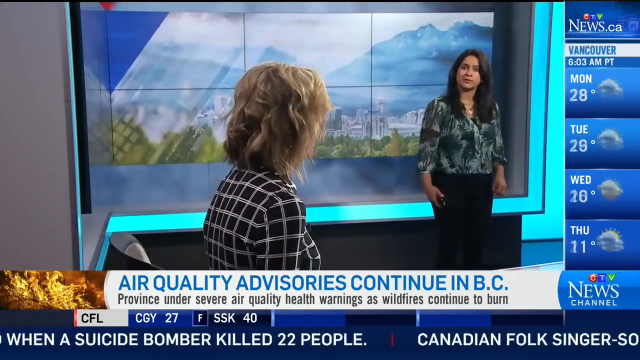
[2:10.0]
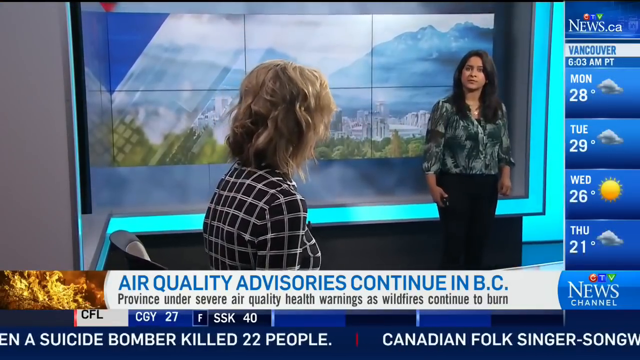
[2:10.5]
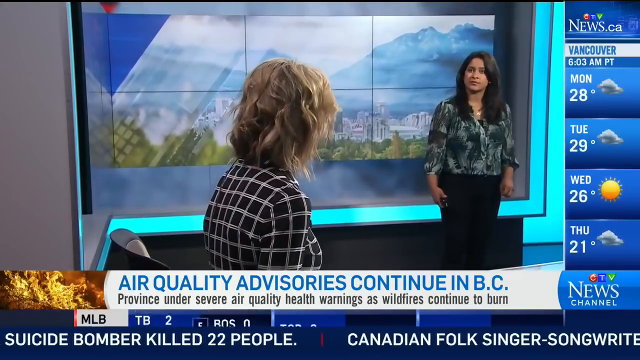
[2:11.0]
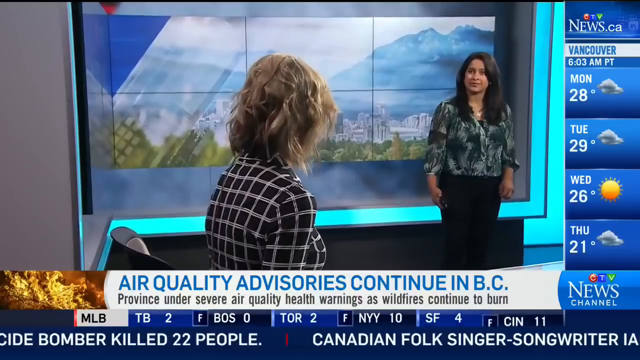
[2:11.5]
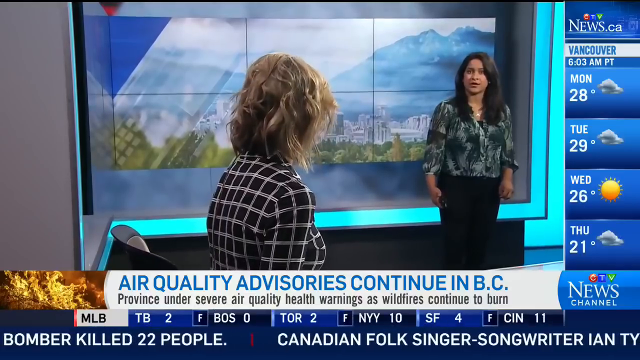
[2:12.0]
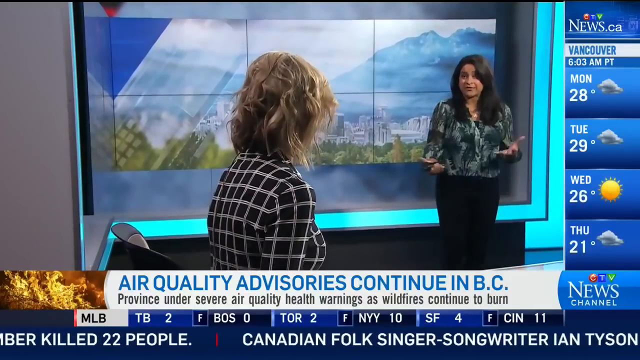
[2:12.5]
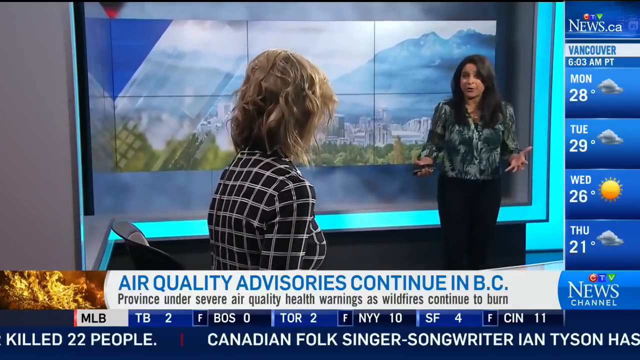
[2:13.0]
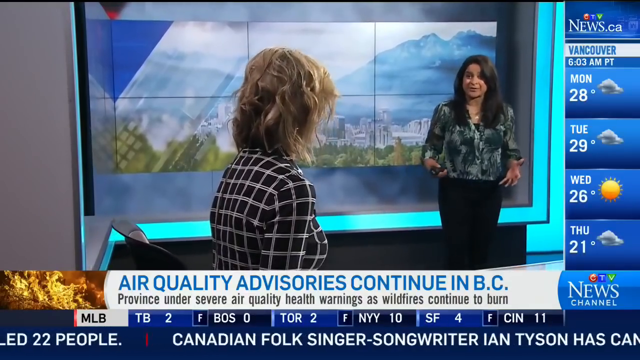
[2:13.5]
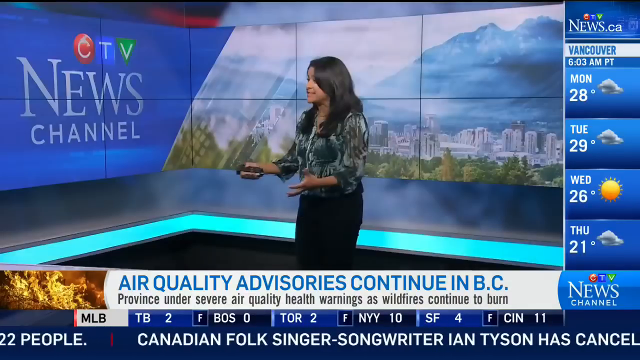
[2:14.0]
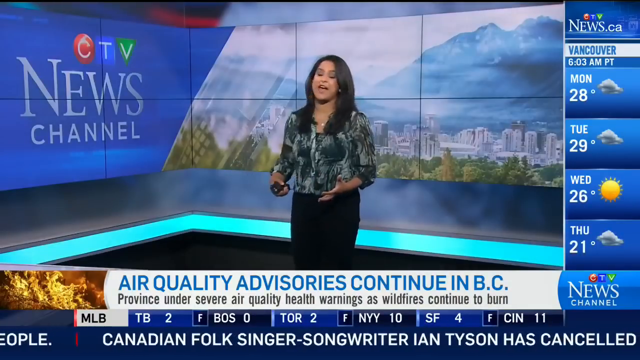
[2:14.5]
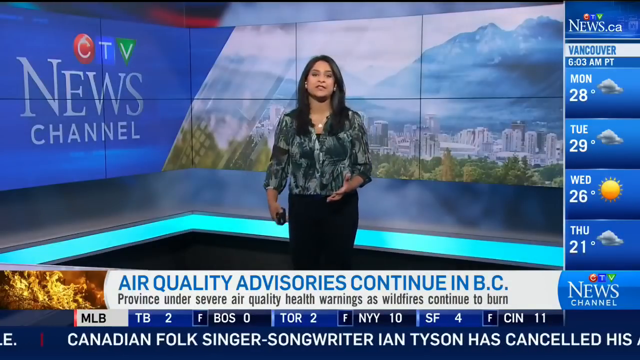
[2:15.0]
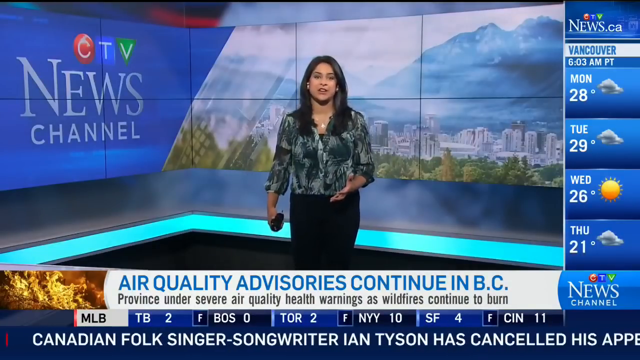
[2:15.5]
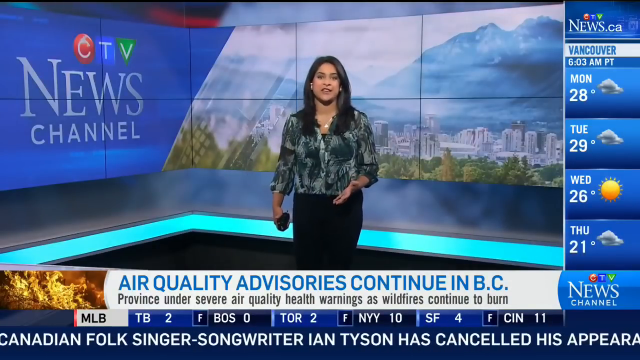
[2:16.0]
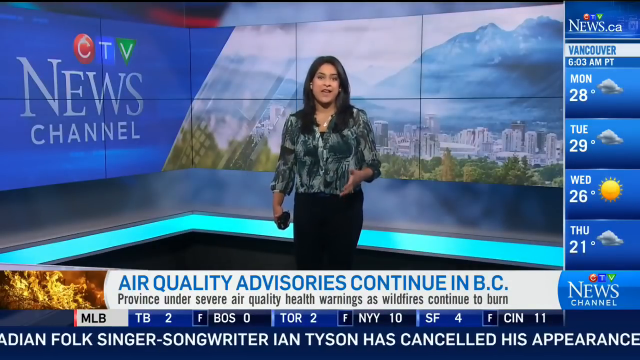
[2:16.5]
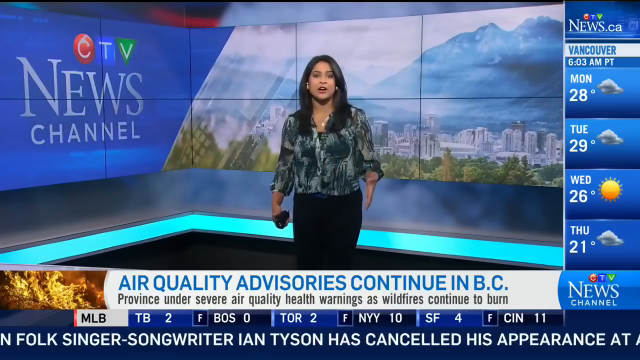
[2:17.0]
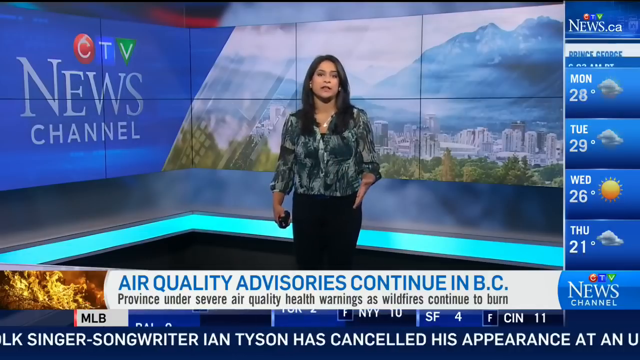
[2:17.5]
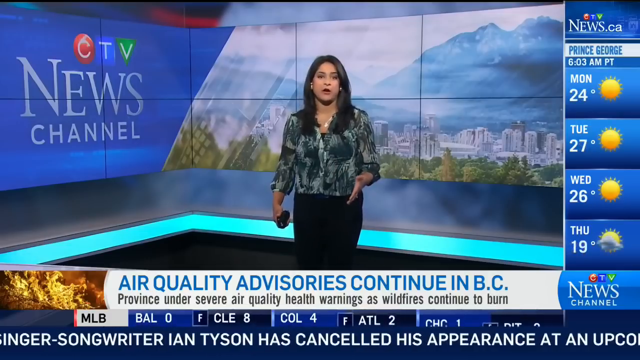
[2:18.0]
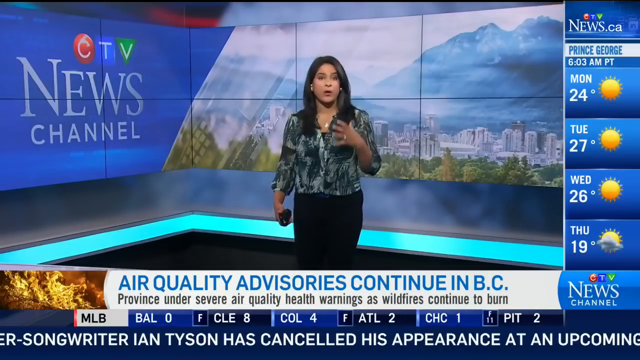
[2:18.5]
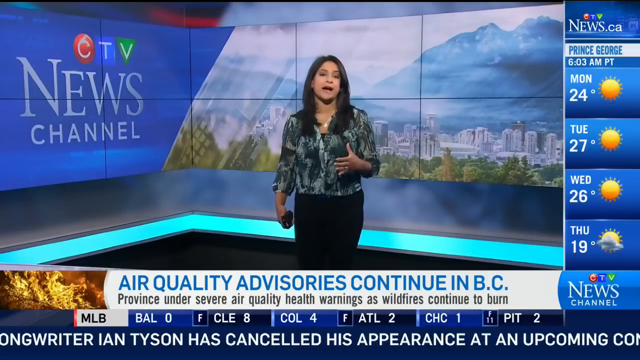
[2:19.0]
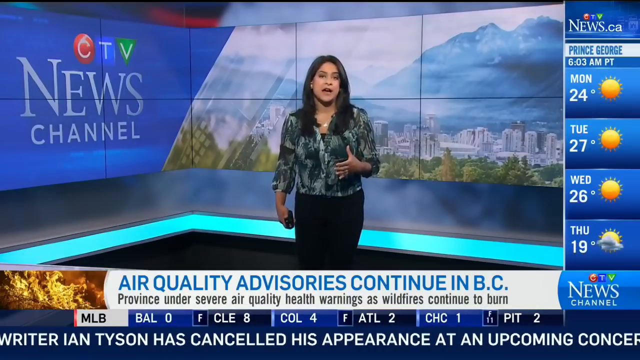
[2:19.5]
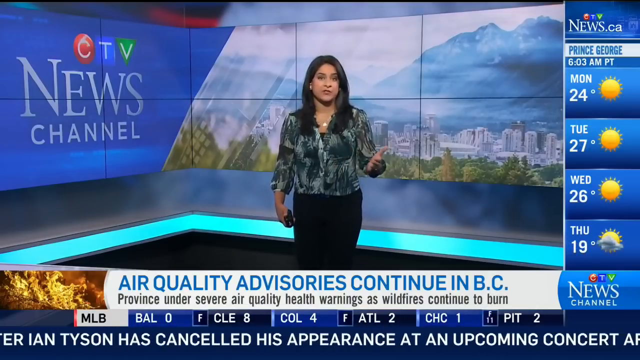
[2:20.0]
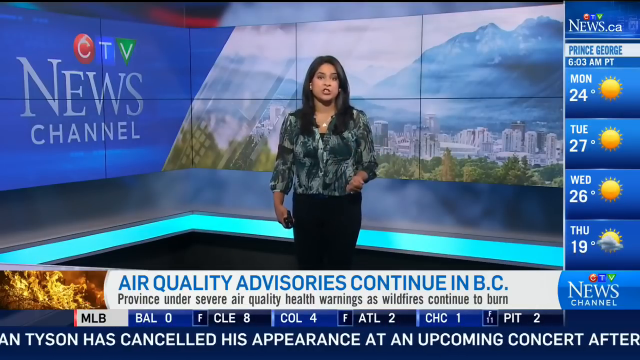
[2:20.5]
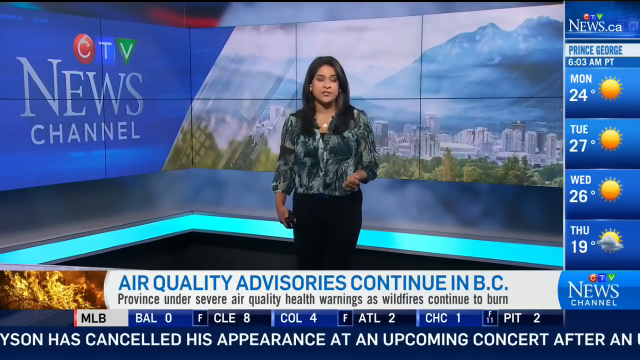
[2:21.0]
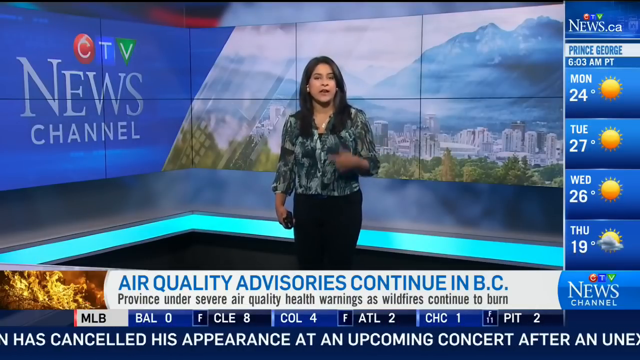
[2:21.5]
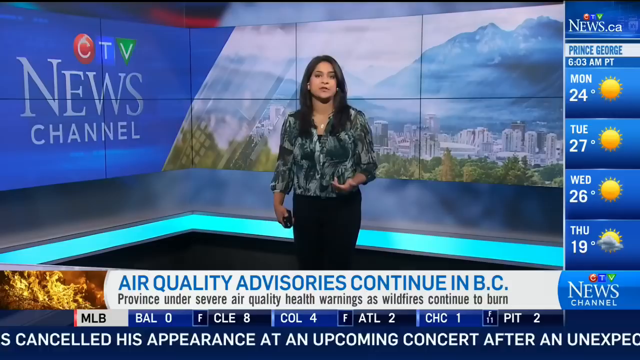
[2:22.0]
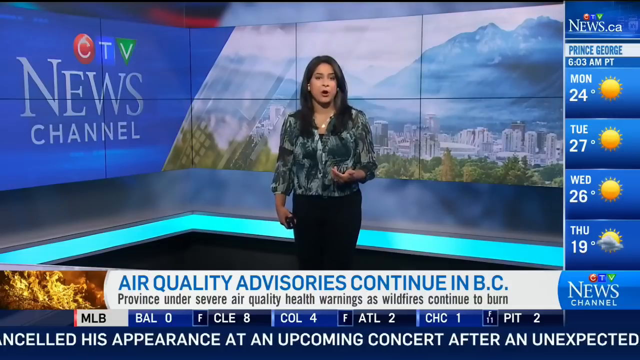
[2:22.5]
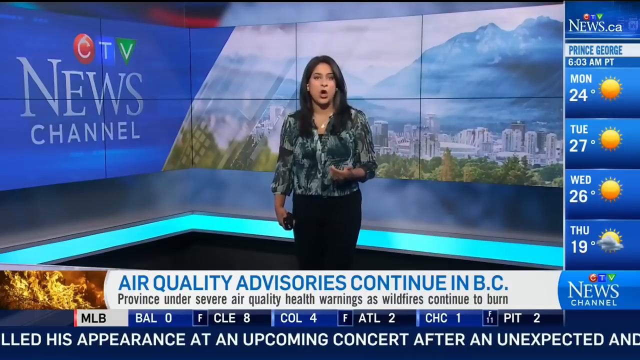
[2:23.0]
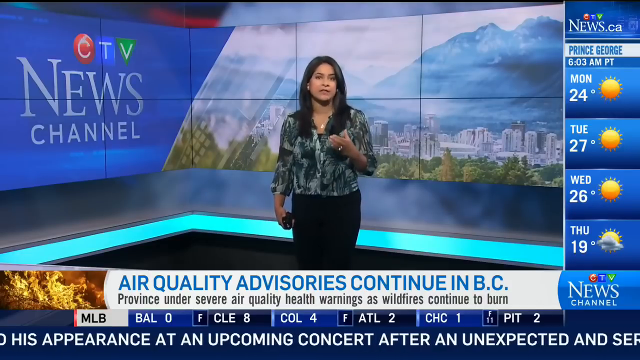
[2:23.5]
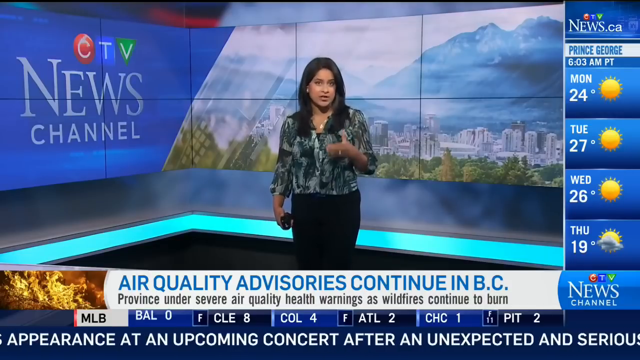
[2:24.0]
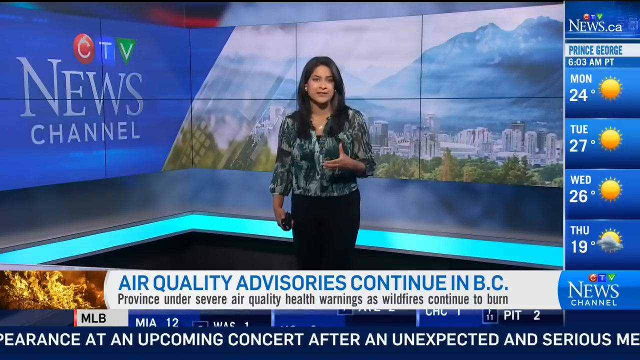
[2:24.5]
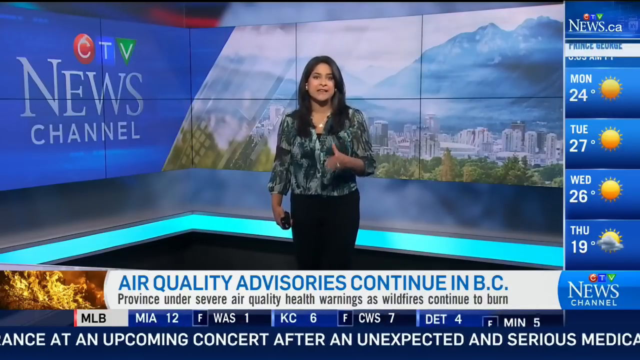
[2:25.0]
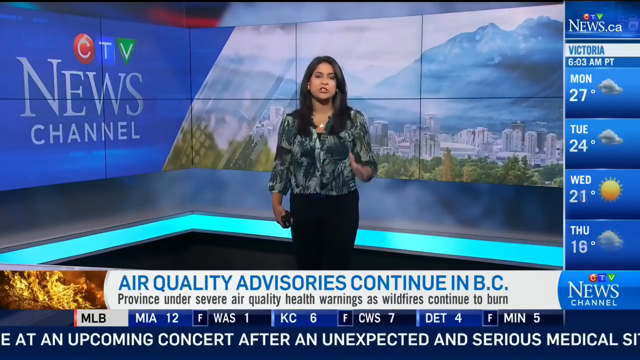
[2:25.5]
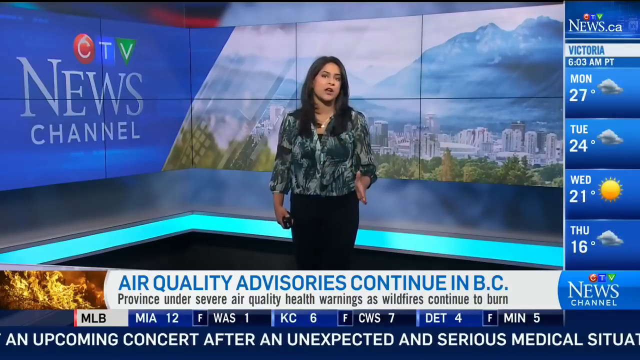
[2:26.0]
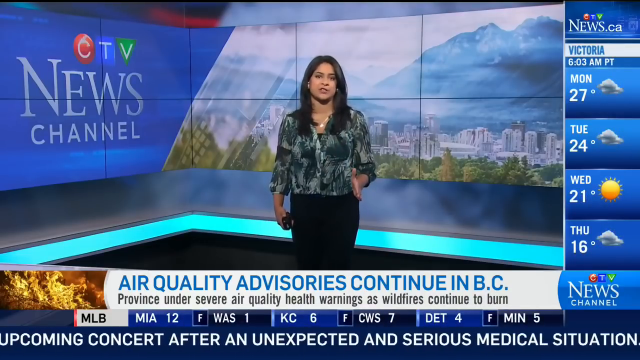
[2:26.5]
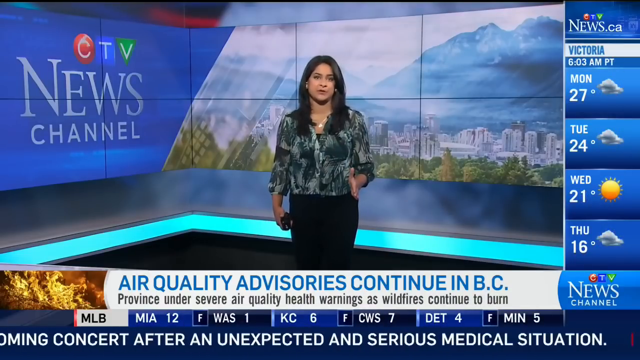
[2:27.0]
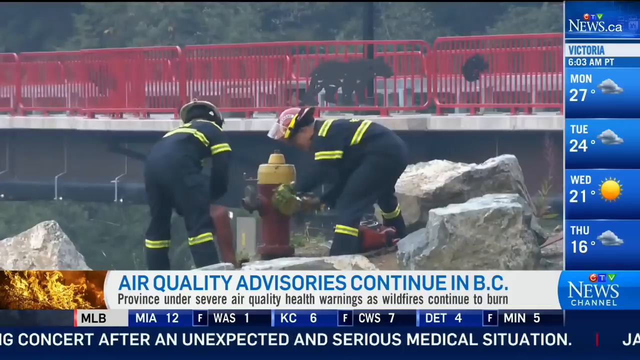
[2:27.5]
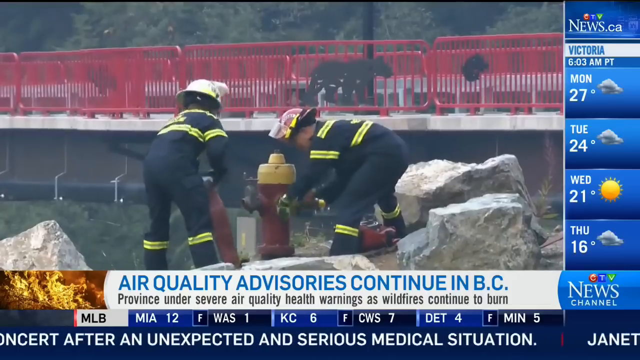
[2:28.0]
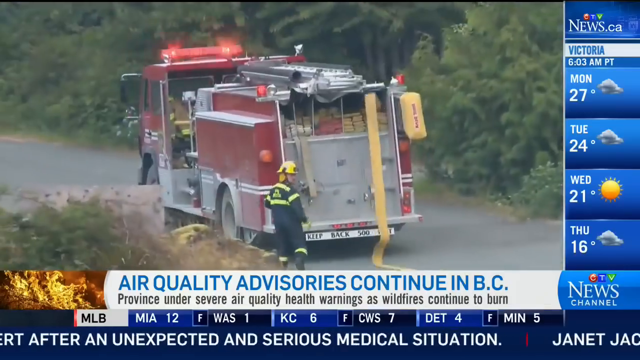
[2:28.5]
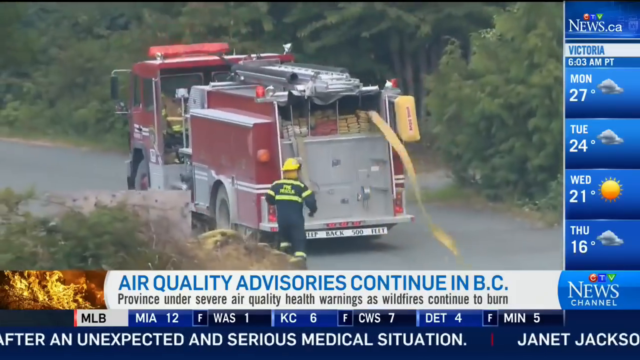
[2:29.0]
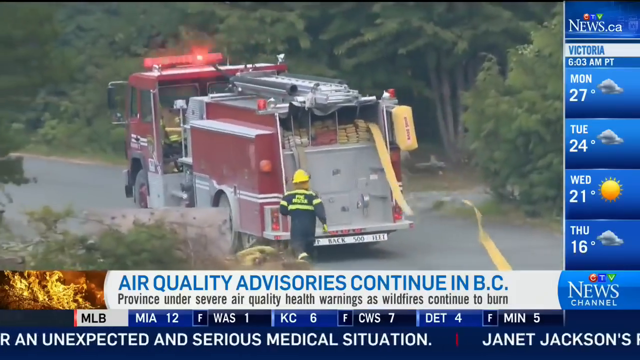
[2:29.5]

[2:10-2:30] The weather for Yellowknife is shown: Monday 19 degrees and partly cloudy, Tuesday 16 degrees partly cloudy, Wednesday 10 degrees cloudy, Thursday 11 degrees cloudy. Then the weather for Vancouver: Monday 28 degrees cloudy, Tuesday 29 degrees cloudy, Wednesday 26 degrees sunny, Thursday 21 degrees cloudy. The presenters are inside the office talking to one another. The standing one holds a black device and talks to the viewer while gesturing with her left hand, on which she wears a ring. Firefighters prepare pipes to try to stop the forest fire. A red fire truck travels along, dropping a yellow pipe for the water, and some firefighters try to unwind the fire hydrant.